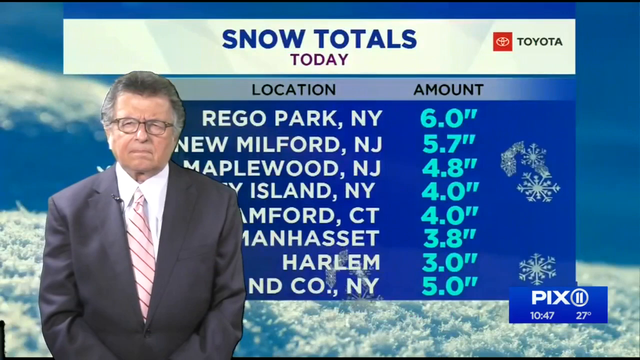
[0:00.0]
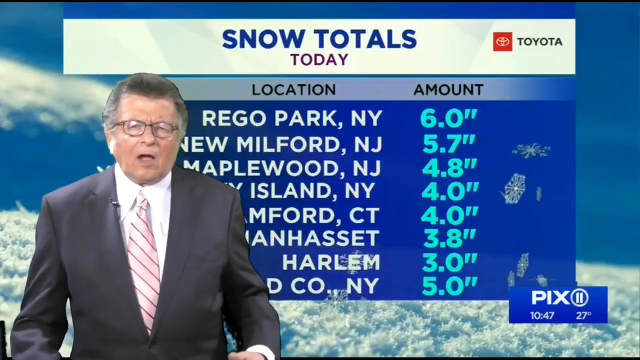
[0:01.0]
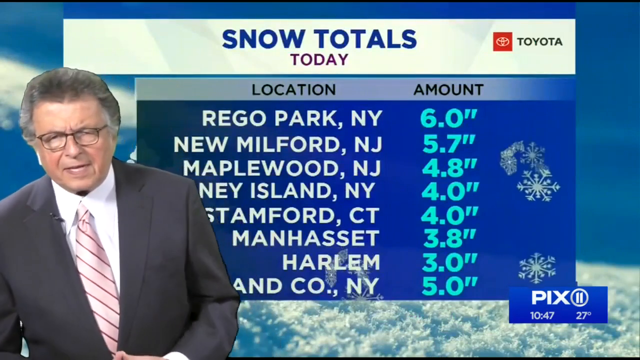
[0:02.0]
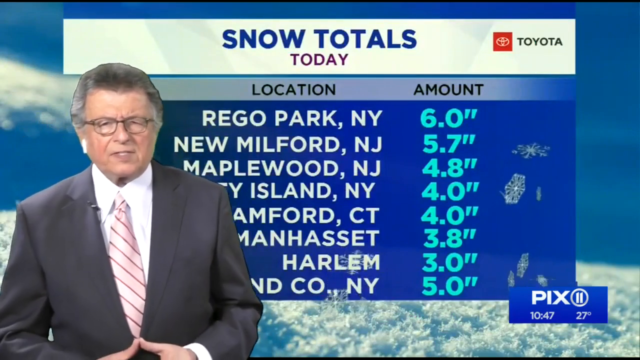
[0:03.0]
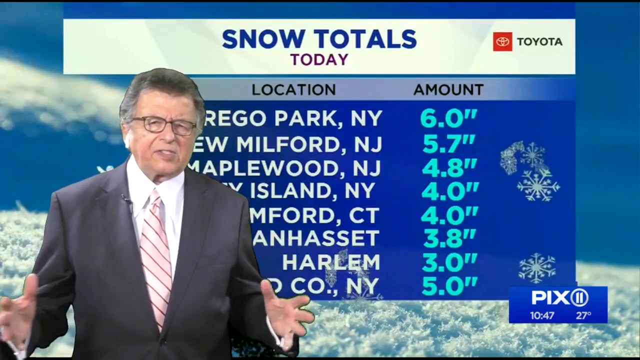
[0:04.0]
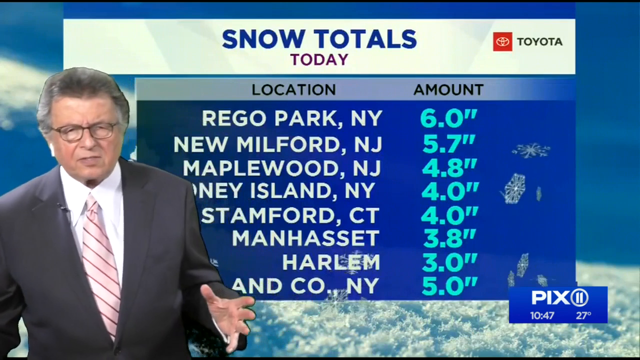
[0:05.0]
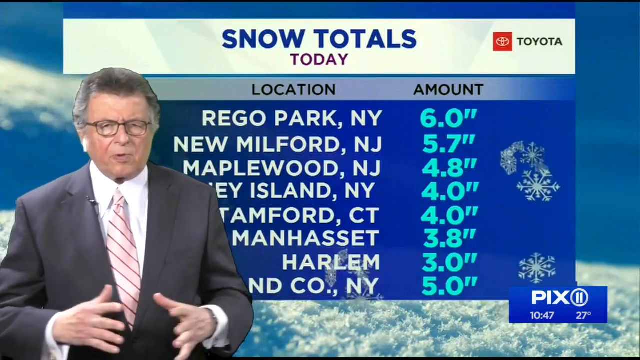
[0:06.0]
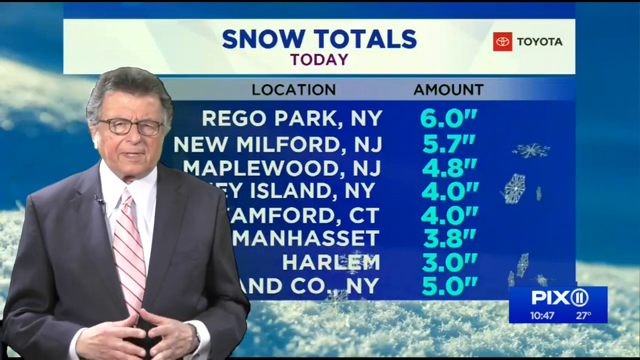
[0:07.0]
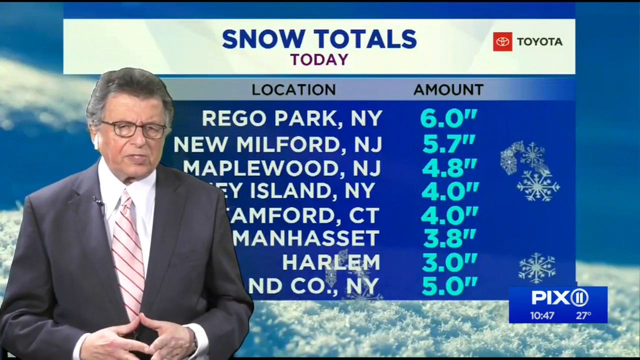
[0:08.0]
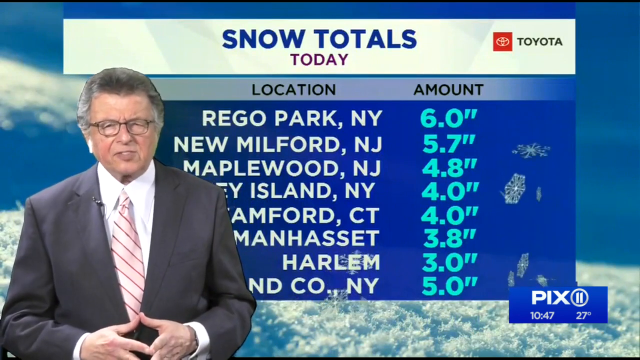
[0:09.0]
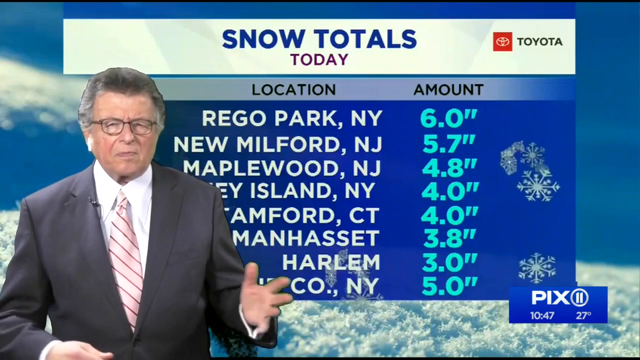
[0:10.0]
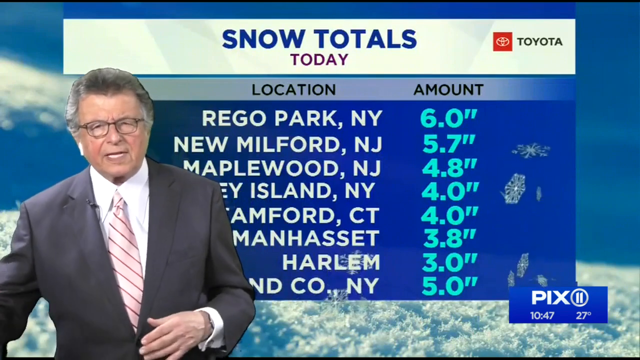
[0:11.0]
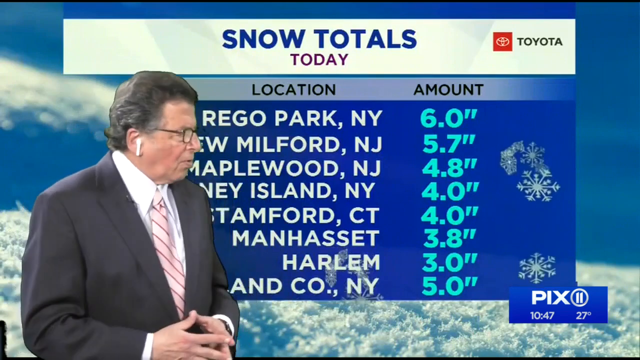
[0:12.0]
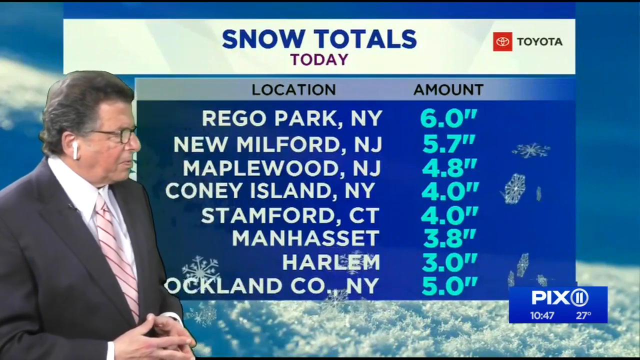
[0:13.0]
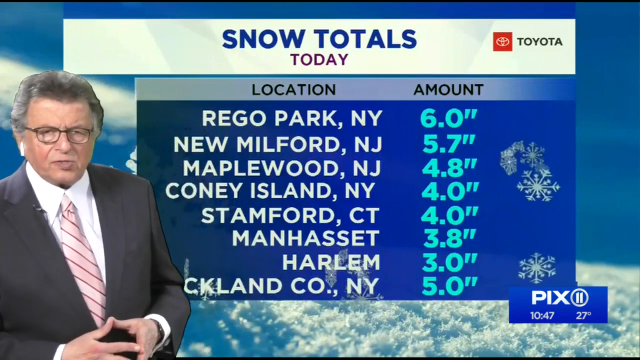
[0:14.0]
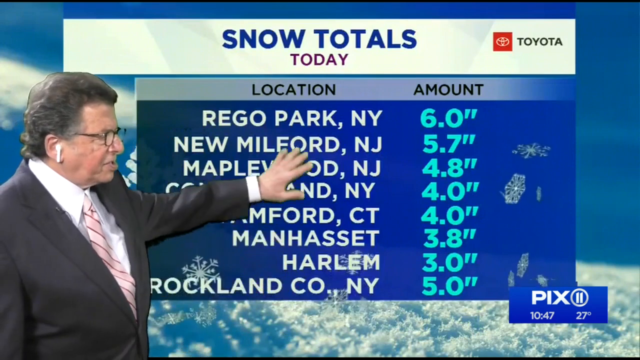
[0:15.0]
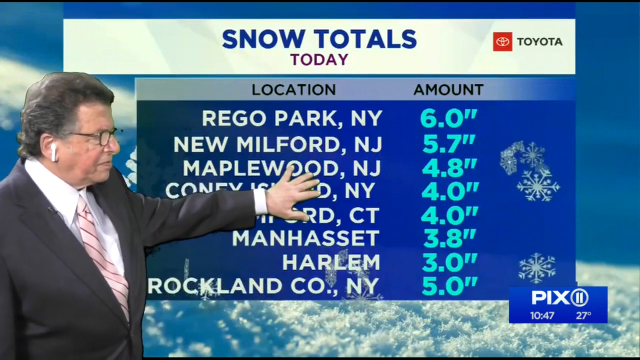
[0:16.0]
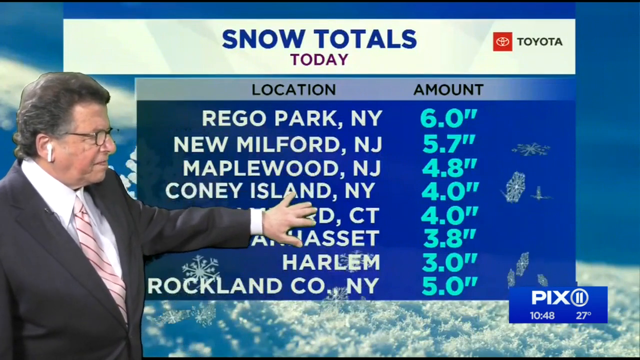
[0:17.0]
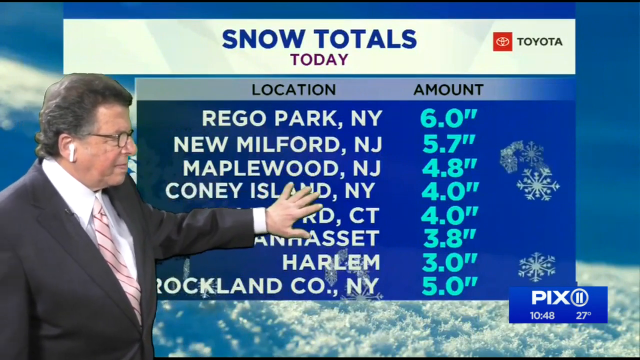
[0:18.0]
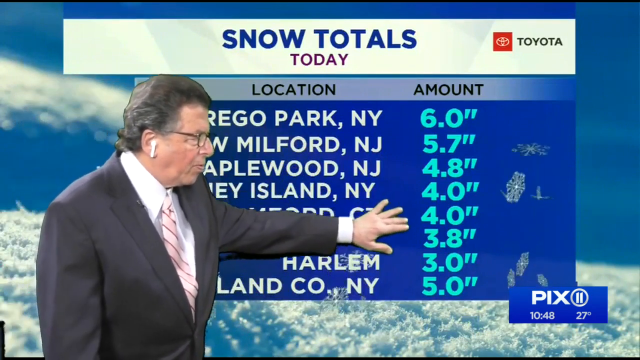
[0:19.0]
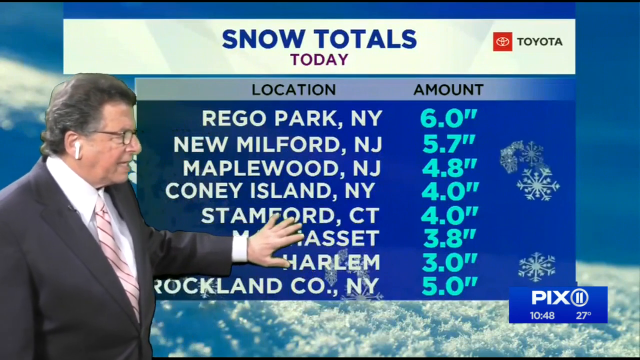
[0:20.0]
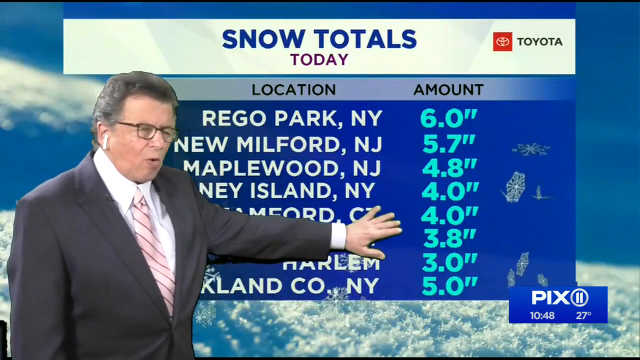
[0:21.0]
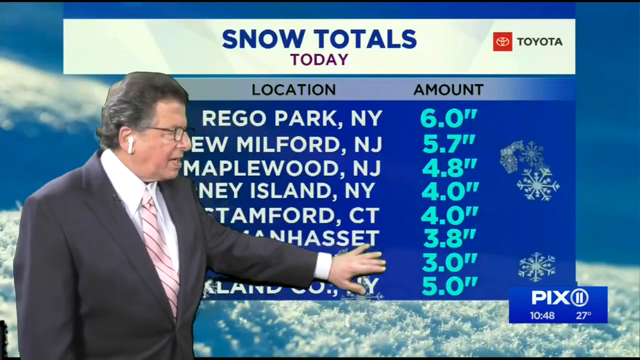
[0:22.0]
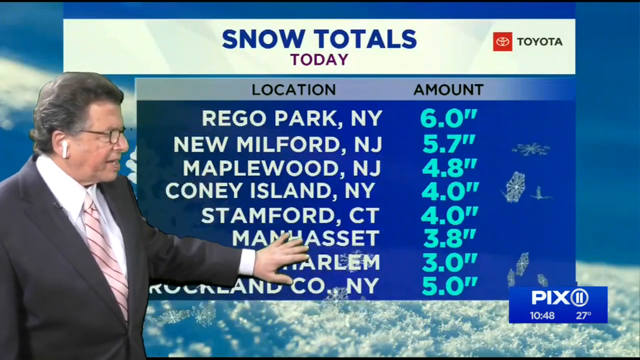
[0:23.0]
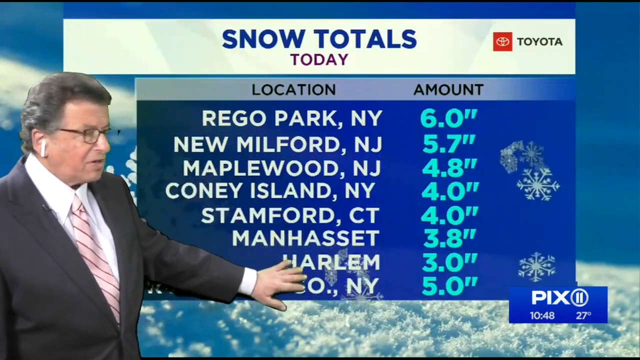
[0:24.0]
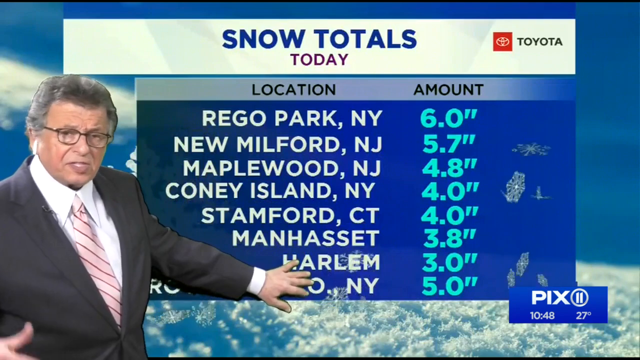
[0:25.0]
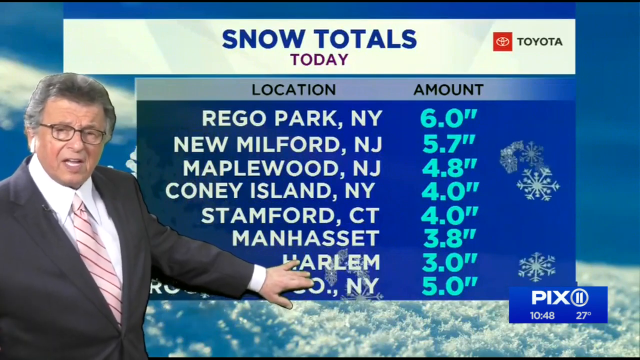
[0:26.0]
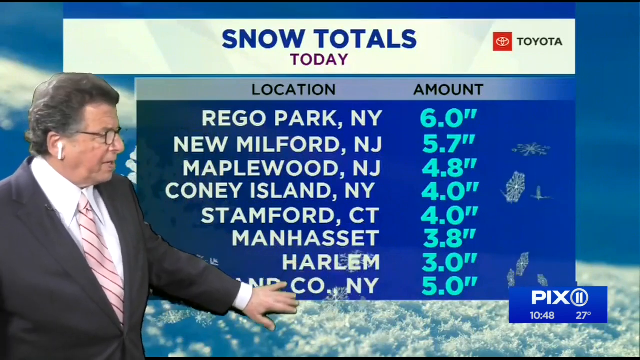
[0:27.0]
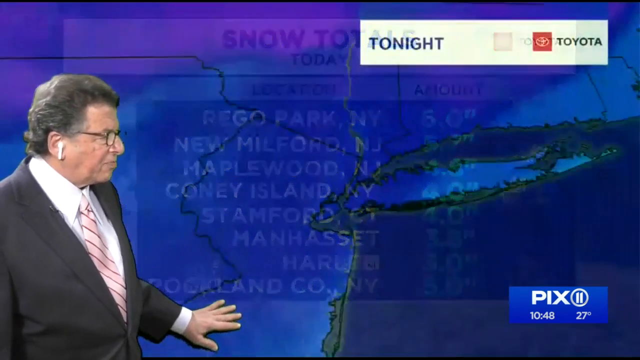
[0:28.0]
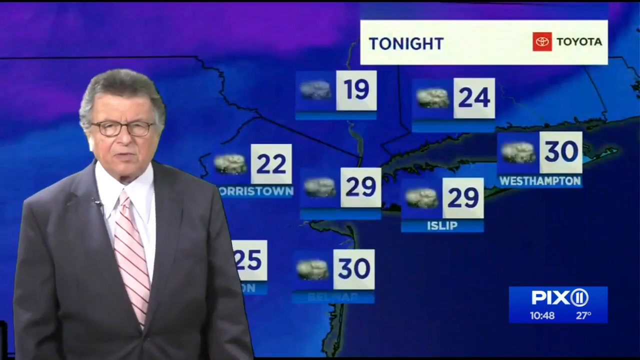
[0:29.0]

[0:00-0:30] A snow totals graph appears, sponsored by Toyota. A white man in glasses, a gray suit and a pink tie, with AirPods in, talks while looking right at the camera, moving his hands with a lot of exaggeration. He is the only person and the only presenter in the video. A location tab and the amount of expected snowfall are shown. In the bottom right there is a PICS logo and a pause button, and the screen shows a time and a temperature. Place names include Rego Park, New Milford, Maplewood, Coney Island and Stamford, Connecticut; it seems to be an Upper East Coast snowfall graph that goes through different cities. The graph shows snow amounts per area: Rego Park has six inches, Maplewood 4.8 and Rockland five. The least is in Harlem, and the most is probably around Rego Park. He then brings up a new graph showing snowfall totals in surrounding areas, with the map focused on New Jersey, New York and Connecticut.